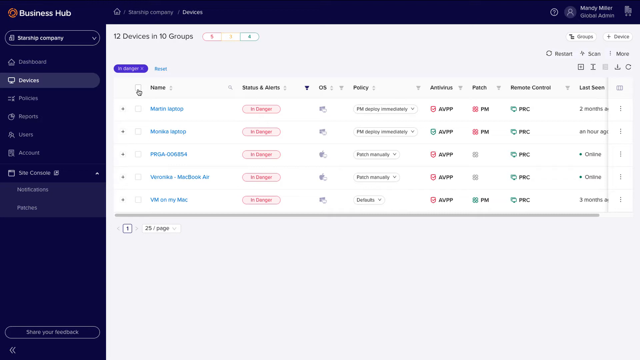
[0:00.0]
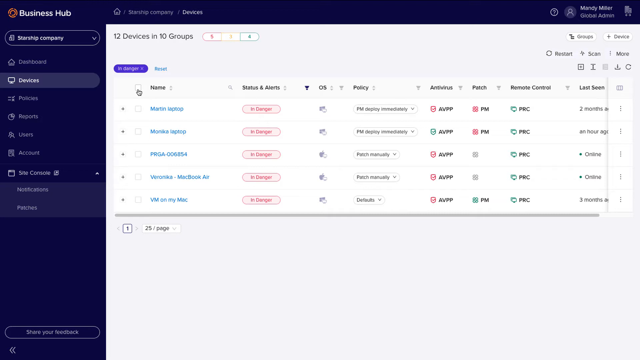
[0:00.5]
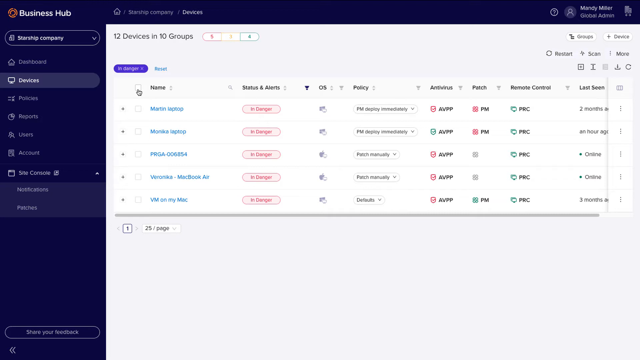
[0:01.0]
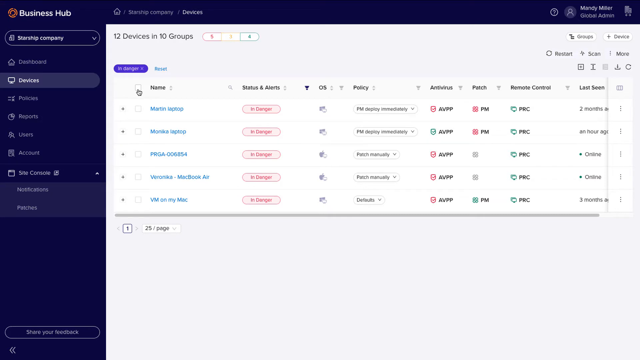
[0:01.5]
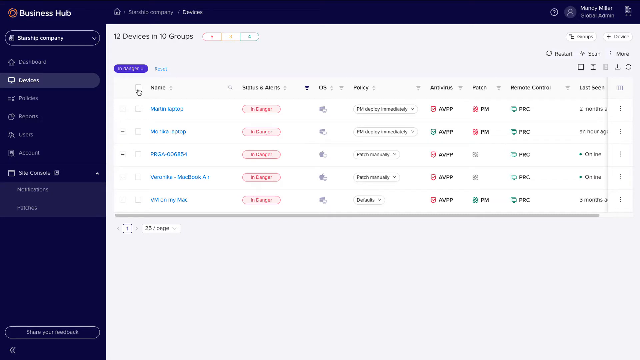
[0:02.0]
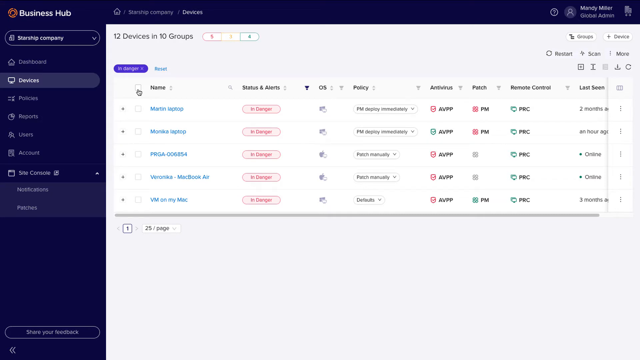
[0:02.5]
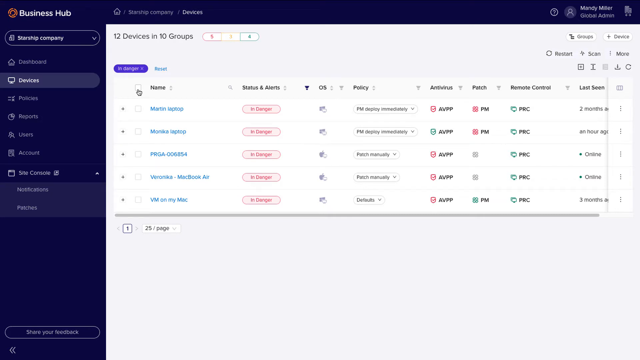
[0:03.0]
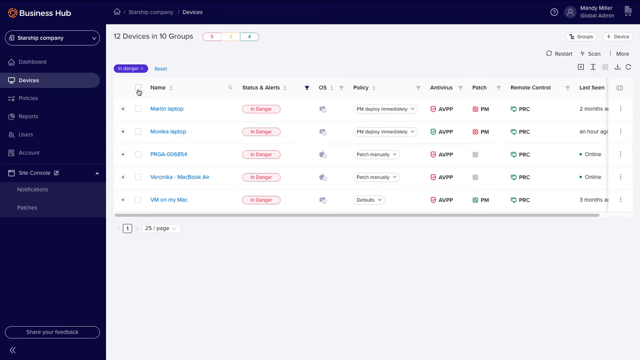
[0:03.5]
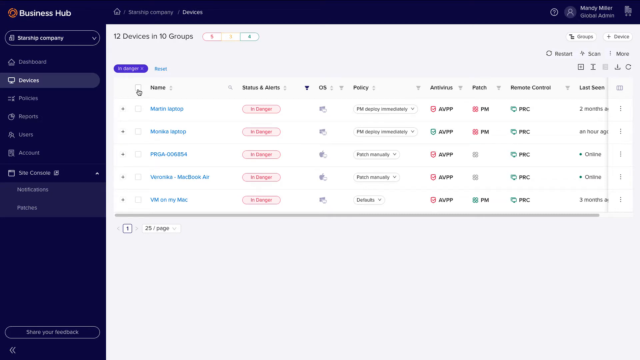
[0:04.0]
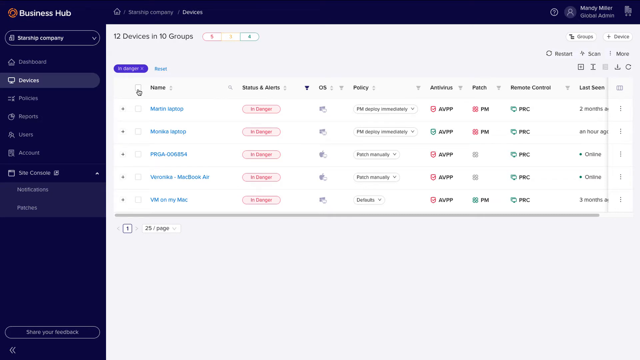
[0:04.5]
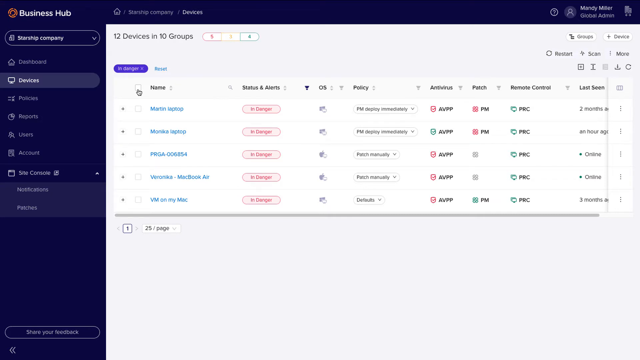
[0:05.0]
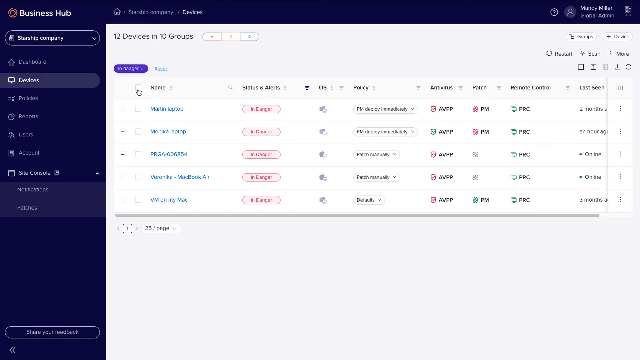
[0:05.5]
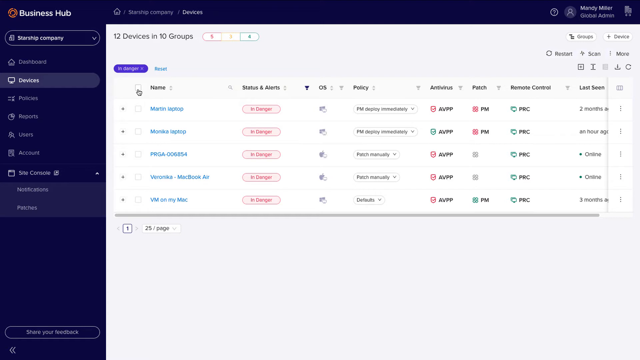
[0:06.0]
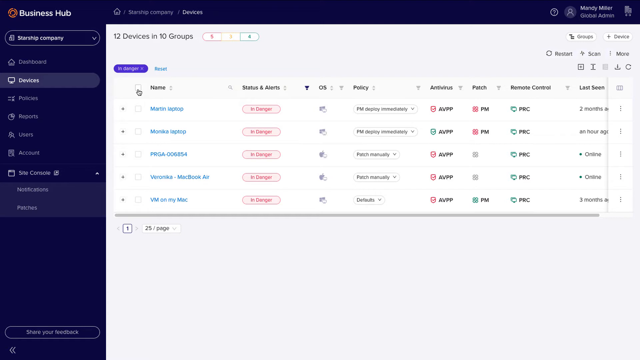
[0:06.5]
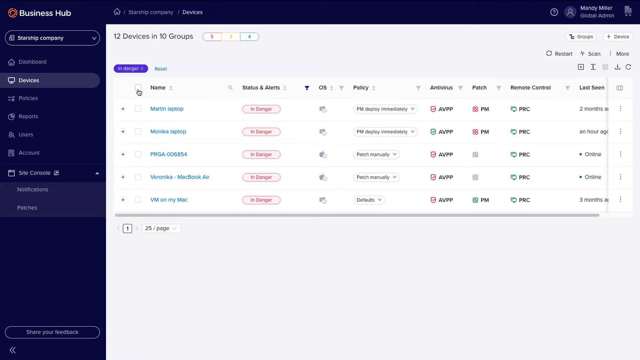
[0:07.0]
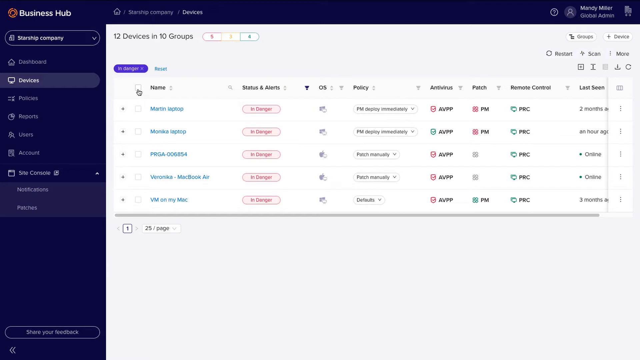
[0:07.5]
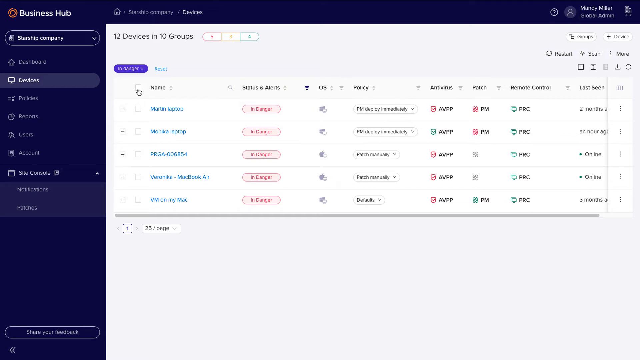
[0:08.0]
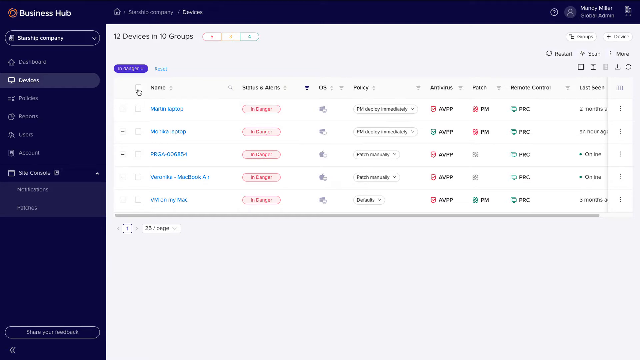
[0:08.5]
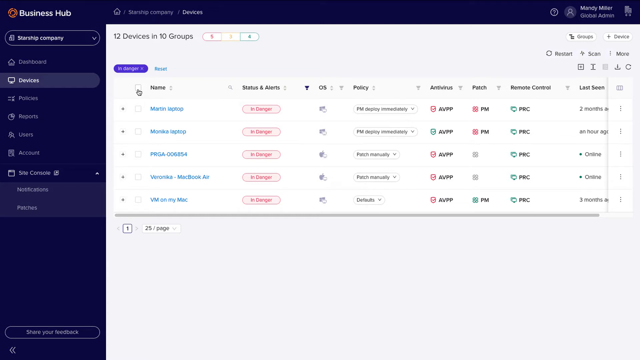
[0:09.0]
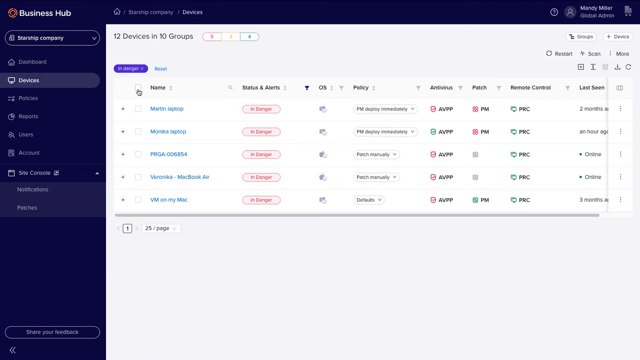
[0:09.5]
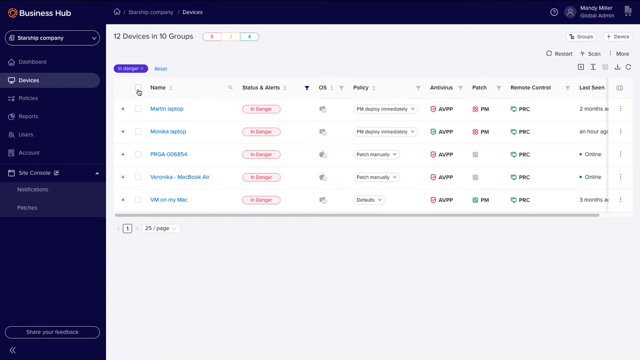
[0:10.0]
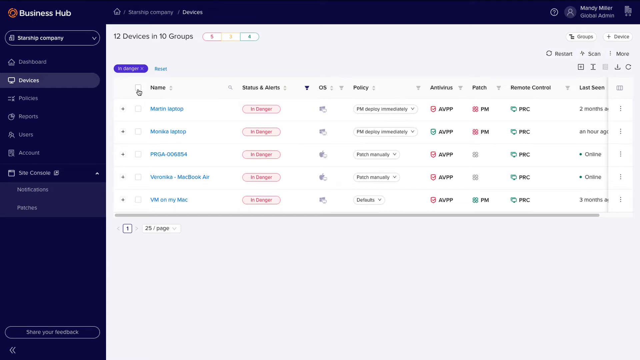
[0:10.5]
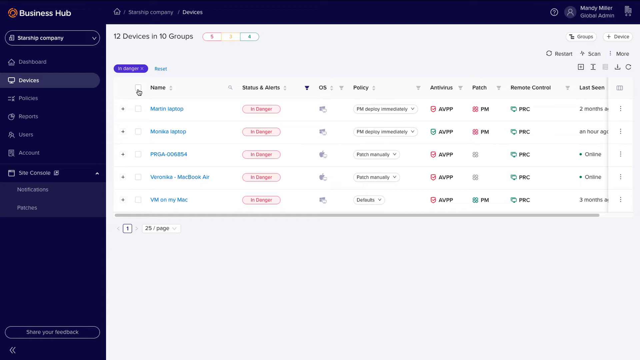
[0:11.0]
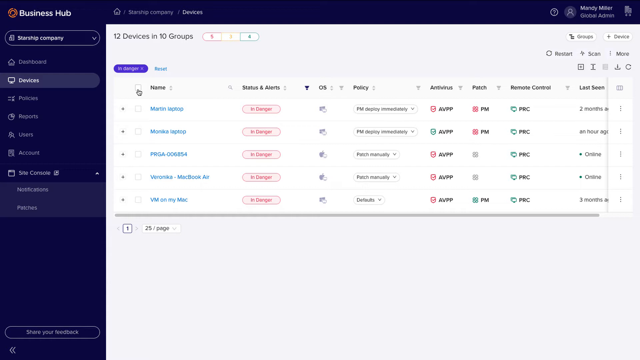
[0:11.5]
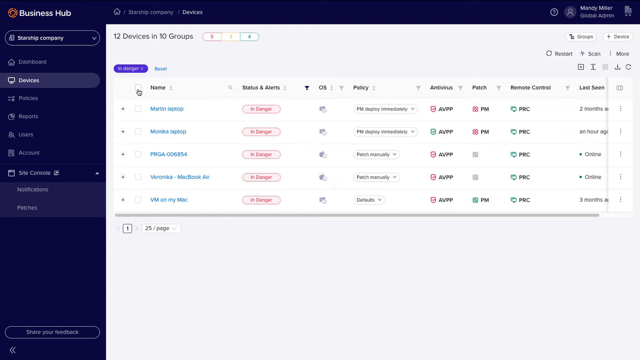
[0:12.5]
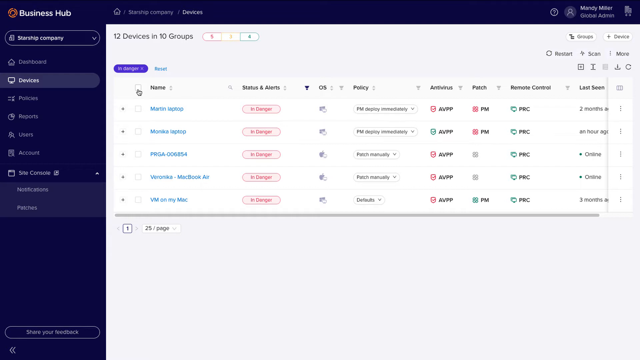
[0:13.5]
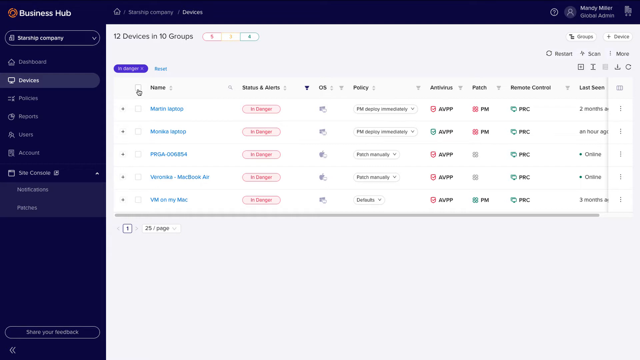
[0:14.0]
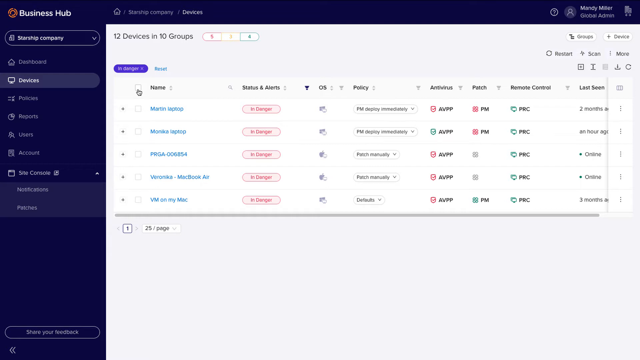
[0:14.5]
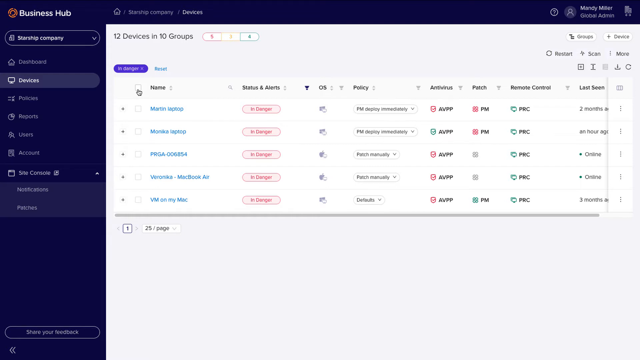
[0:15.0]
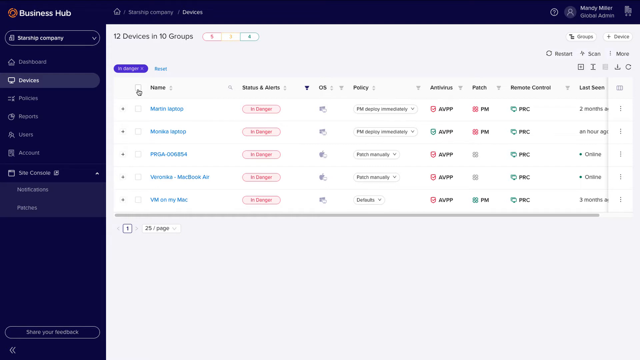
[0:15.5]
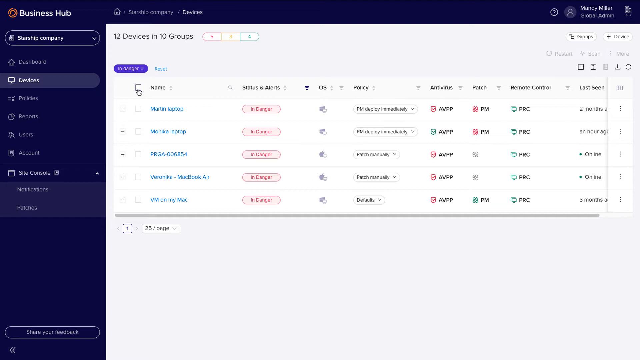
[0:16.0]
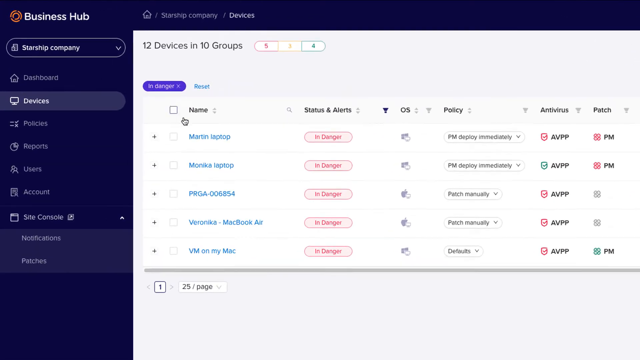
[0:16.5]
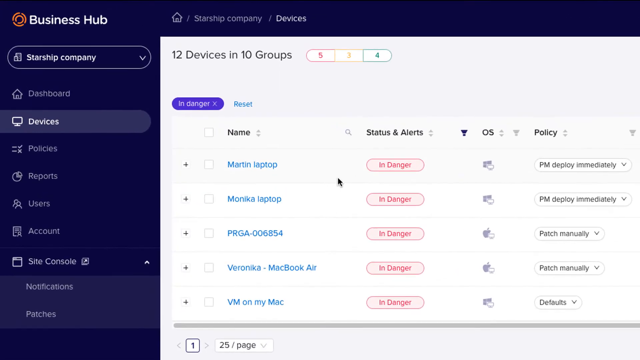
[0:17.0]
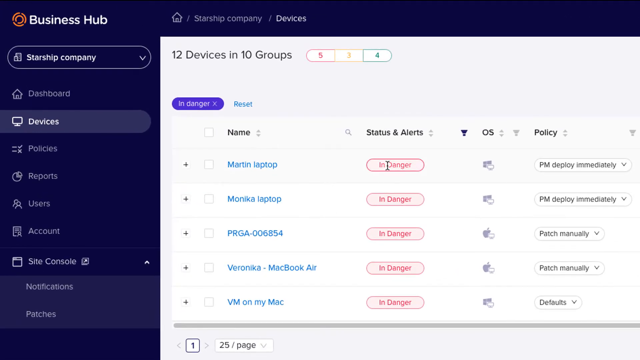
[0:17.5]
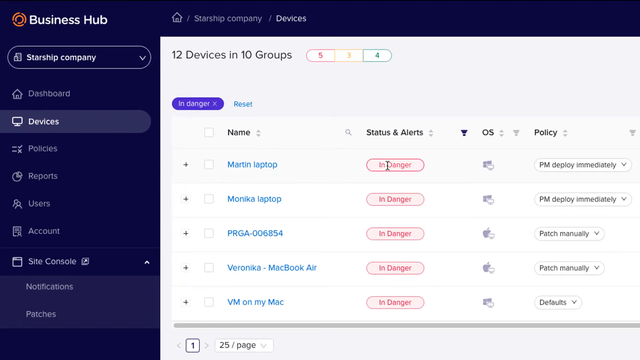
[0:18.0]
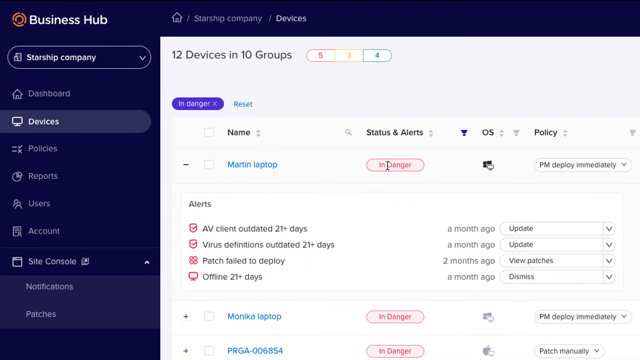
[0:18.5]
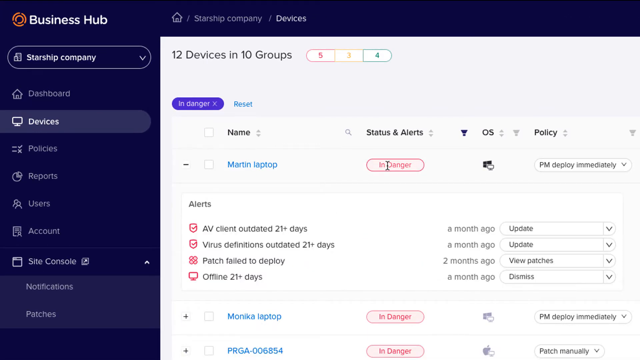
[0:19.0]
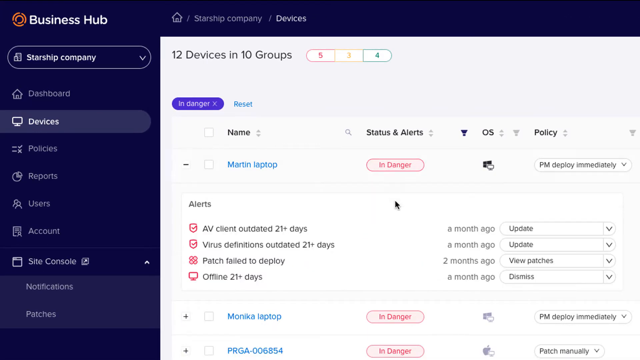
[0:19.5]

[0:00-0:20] The Business Hub is shown, apparently on a computer, with text written on the screen. There seems to be a device listed that can be pressed to check it, along with a search option and an option to edit. A dashboard is visible that shows some days. Devices in groups are shown, with 12 devices in 10 groups.